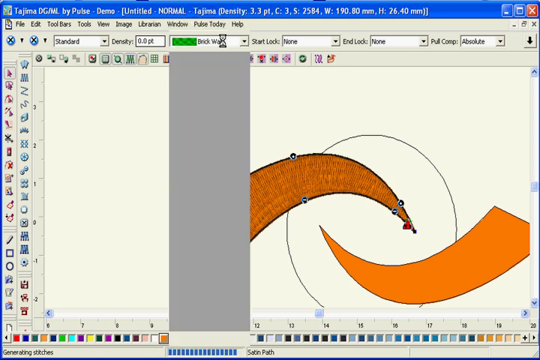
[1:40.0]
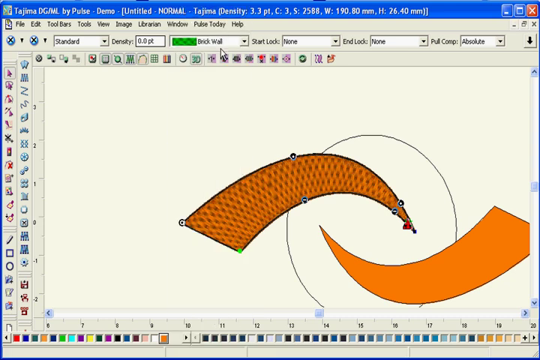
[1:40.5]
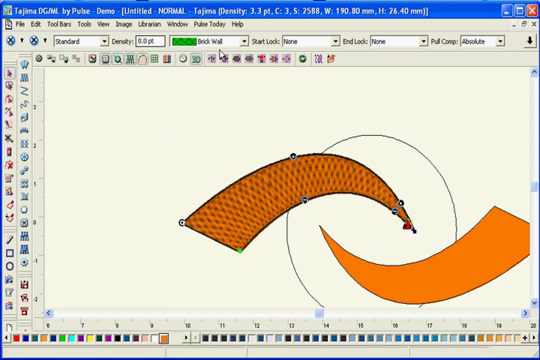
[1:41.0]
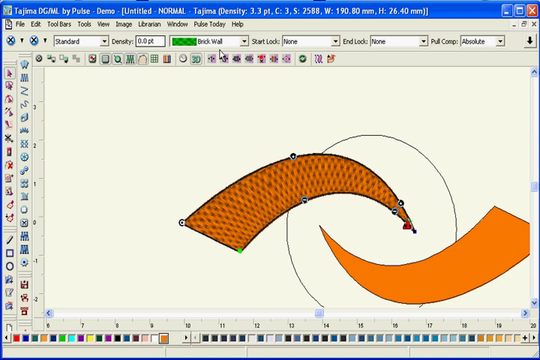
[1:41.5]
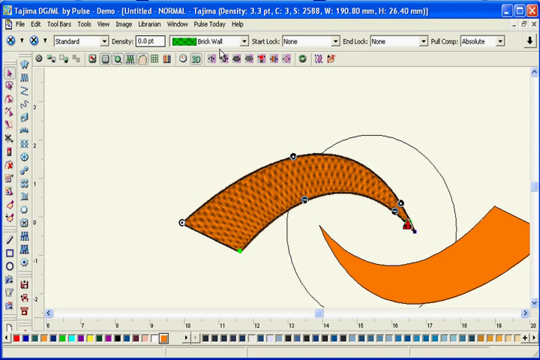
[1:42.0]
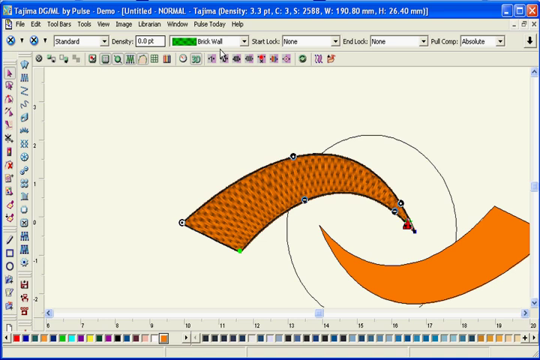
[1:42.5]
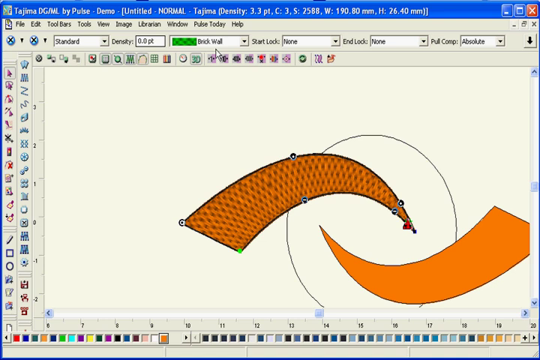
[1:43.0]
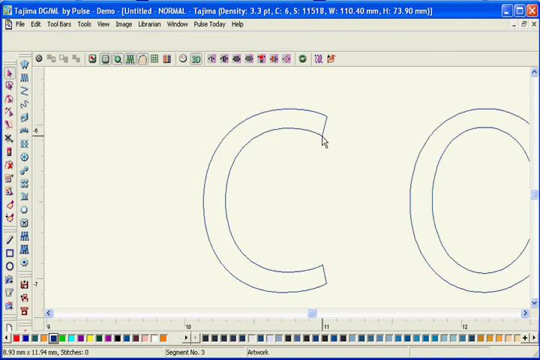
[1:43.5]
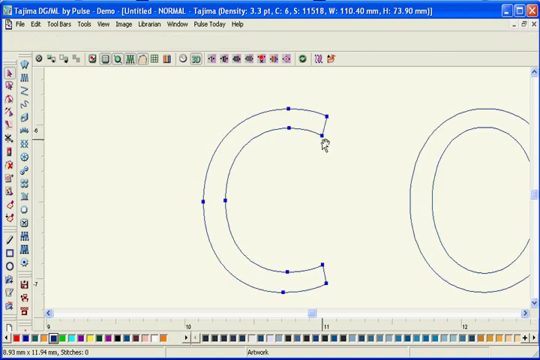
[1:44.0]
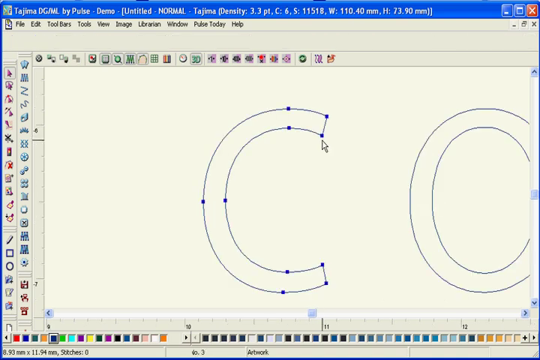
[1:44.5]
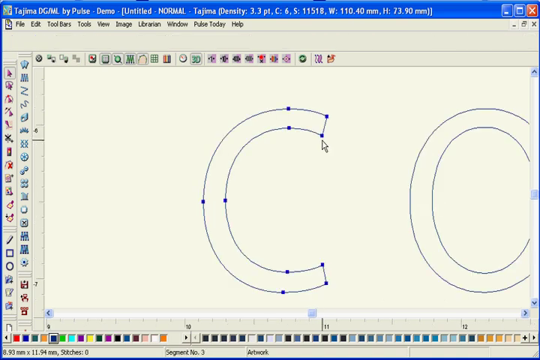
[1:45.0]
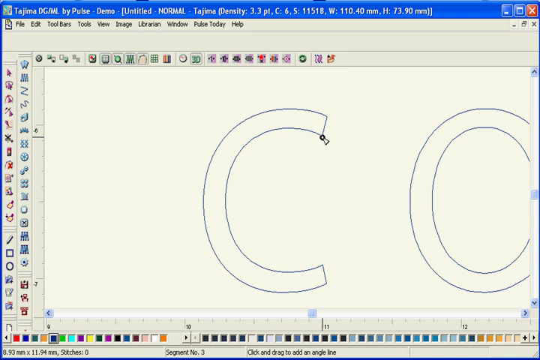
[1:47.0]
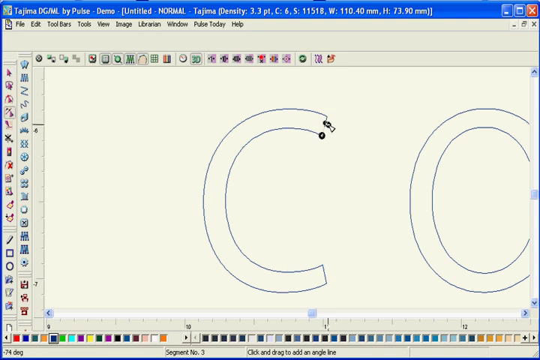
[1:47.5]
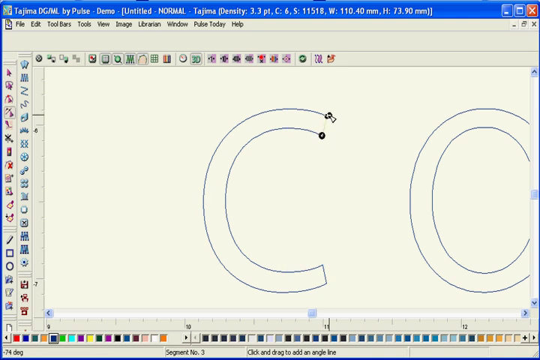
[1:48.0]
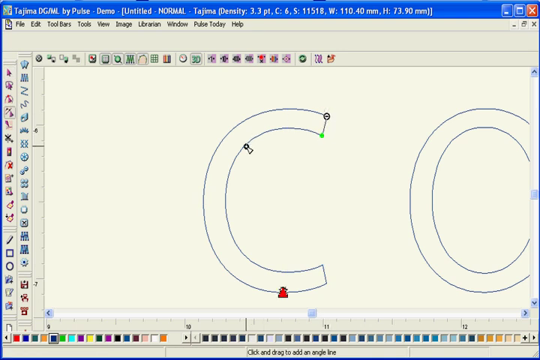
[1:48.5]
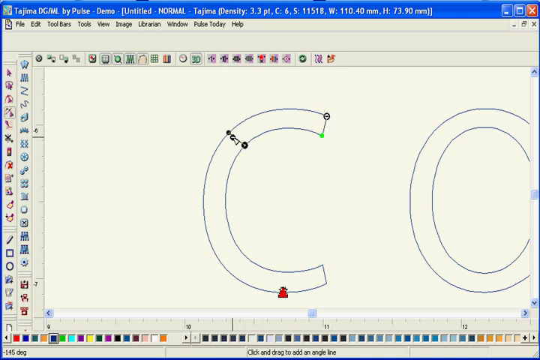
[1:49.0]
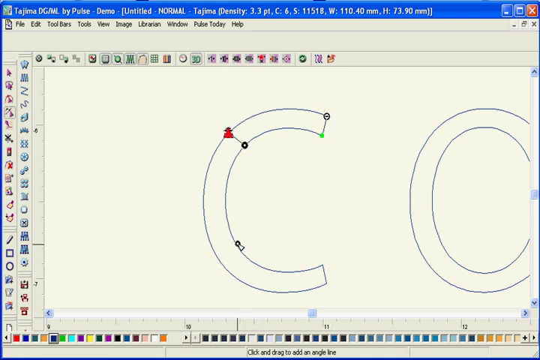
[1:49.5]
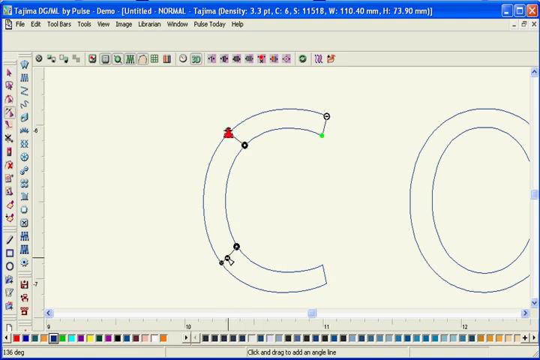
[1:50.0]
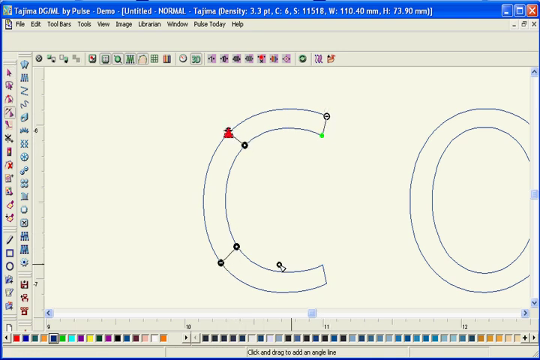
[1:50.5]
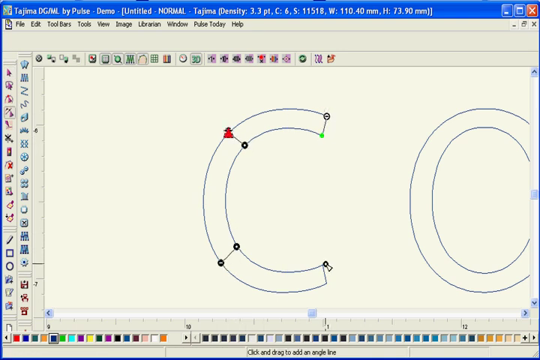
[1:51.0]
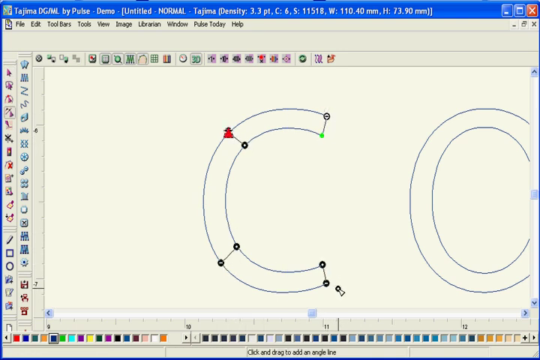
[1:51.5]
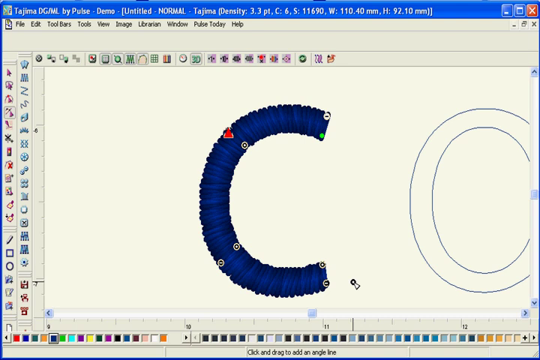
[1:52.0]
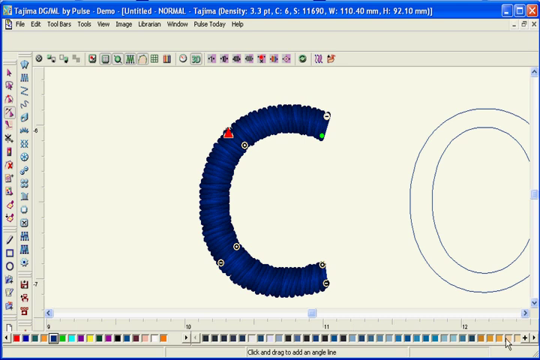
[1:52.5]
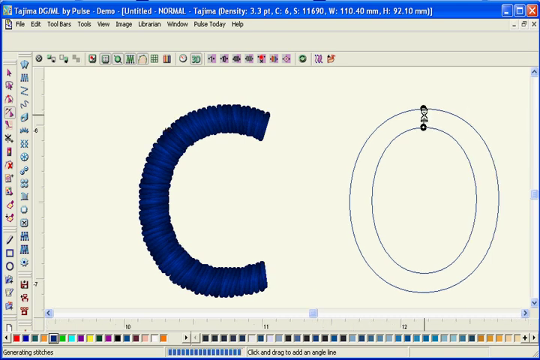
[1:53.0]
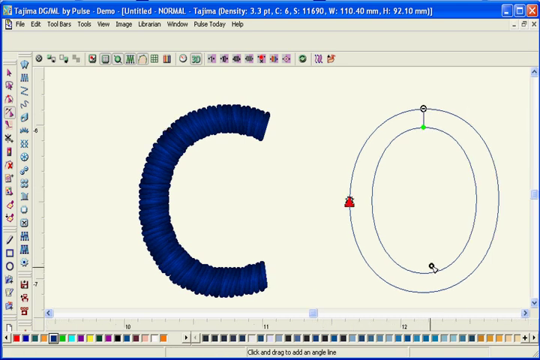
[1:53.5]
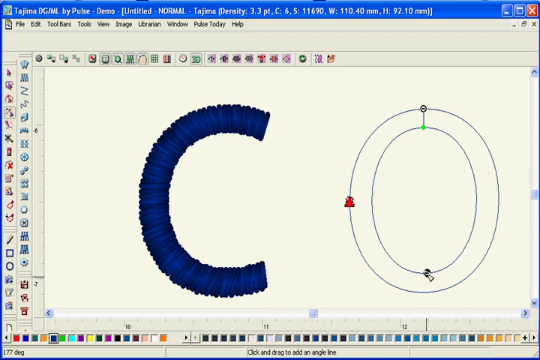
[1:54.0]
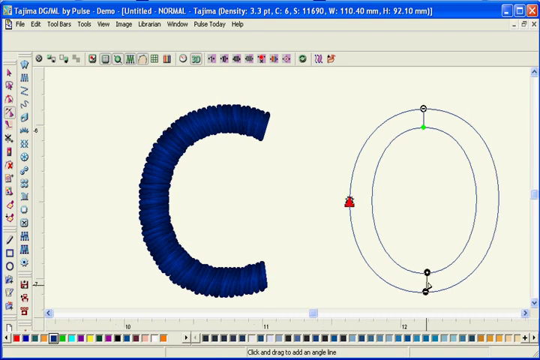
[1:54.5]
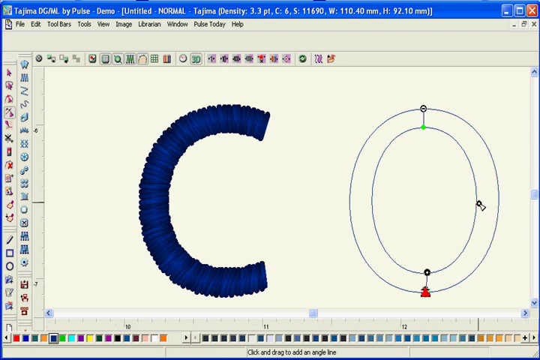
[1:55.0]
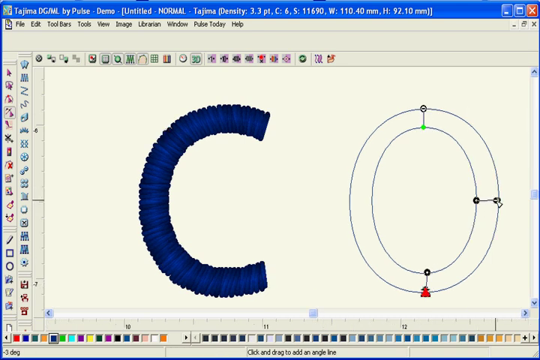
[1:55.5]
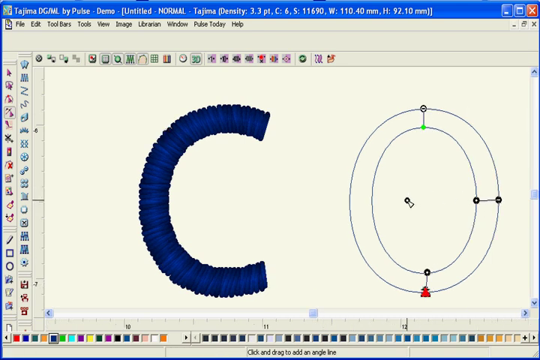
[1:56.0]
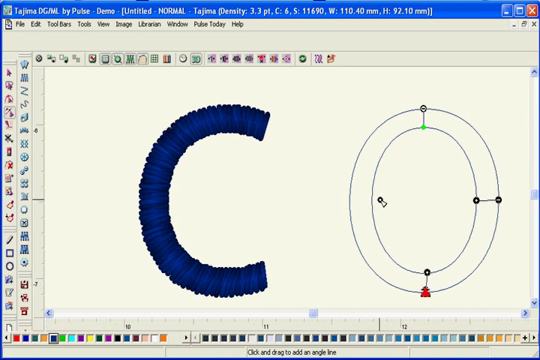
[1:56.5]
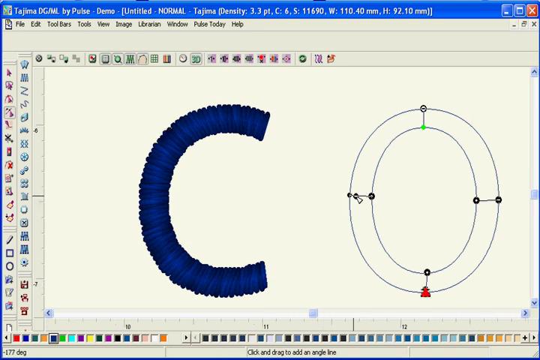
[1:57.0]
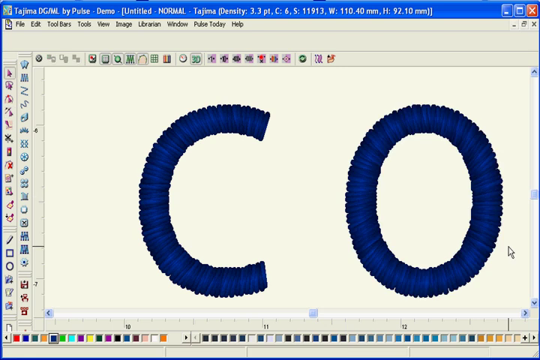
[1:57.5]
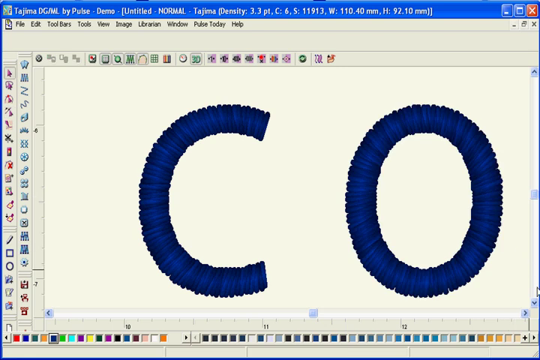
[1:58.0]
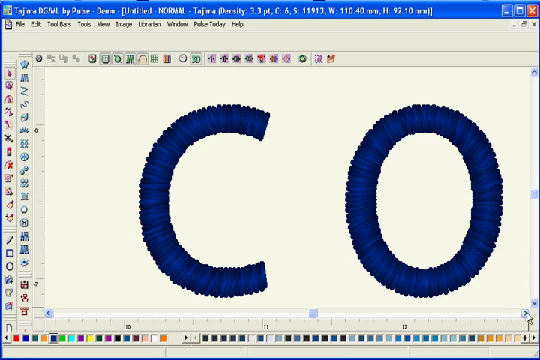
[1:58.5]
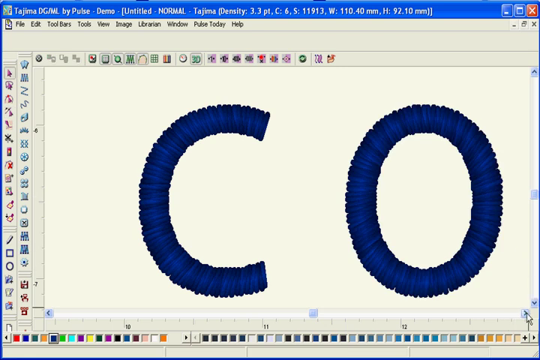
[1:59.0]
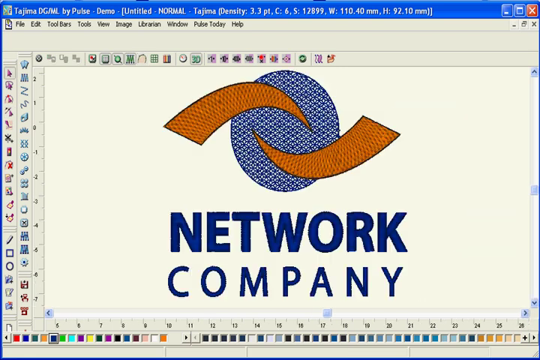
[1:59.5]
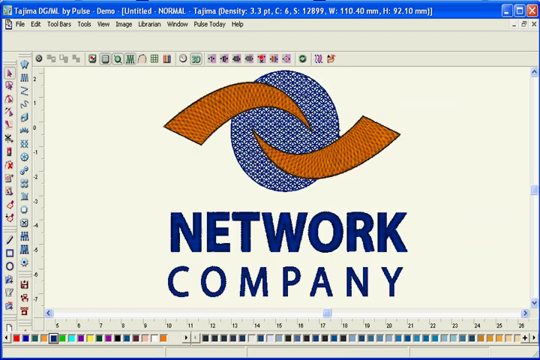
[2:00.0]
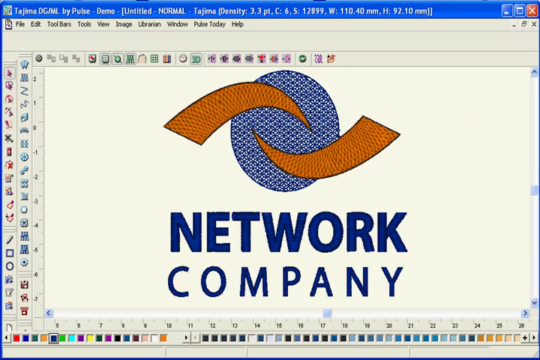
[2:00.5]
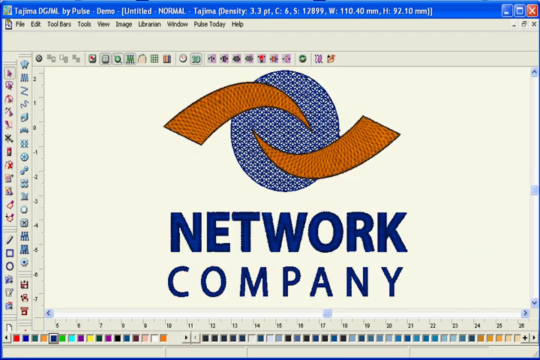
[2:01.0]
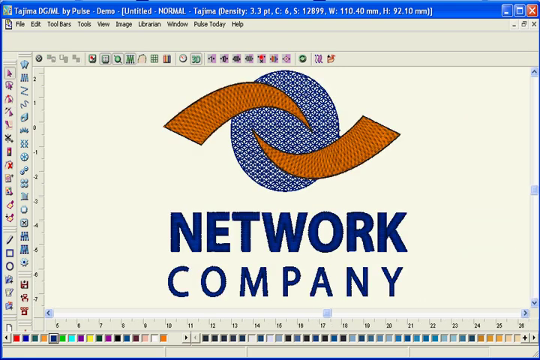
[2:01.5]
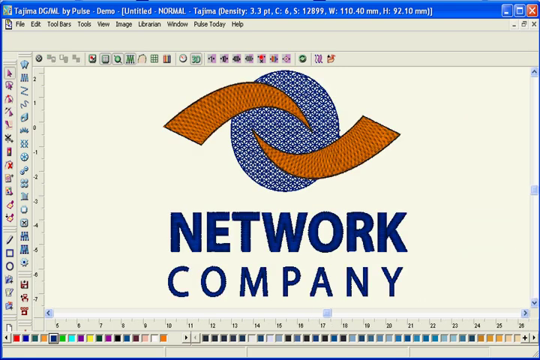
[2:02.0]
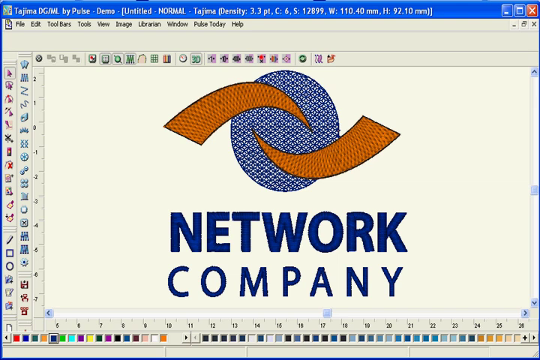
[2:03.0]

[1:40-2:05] Someone's computer screen is shown. At the top, in blue, is "TAJIMA", then in all caps "DGML", then "by Pulse"; it is a demo, "untitled", "normal". The screen is white except for two designs that mirror each other. Their ends are rectangular, and as each travels up and then down it gets smaller; the one on the bottom does the exact opposite of the top one. Both are orange. On the next screen, a C and an O appear with no coloring at all.